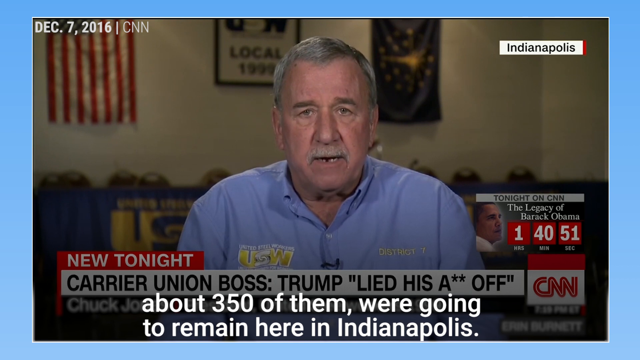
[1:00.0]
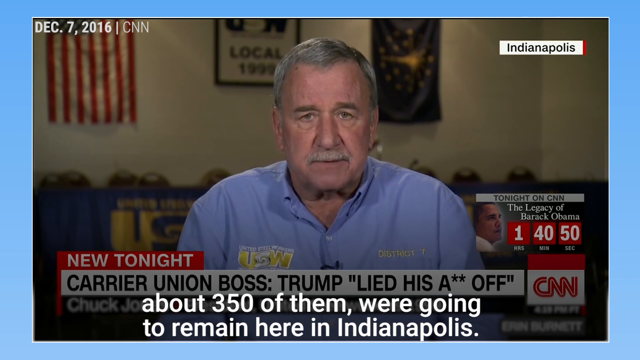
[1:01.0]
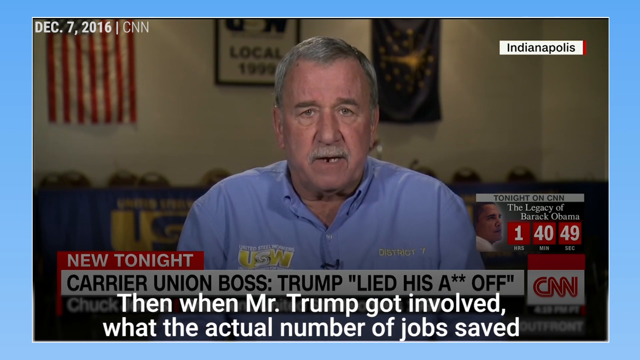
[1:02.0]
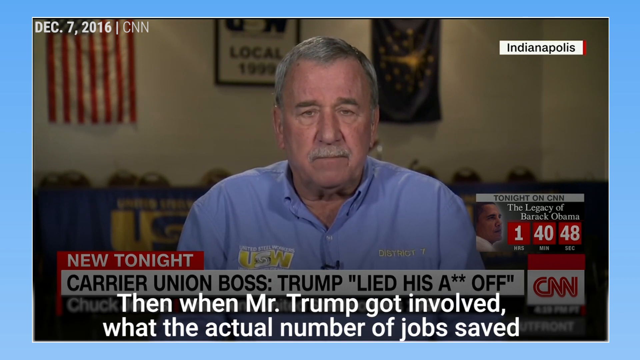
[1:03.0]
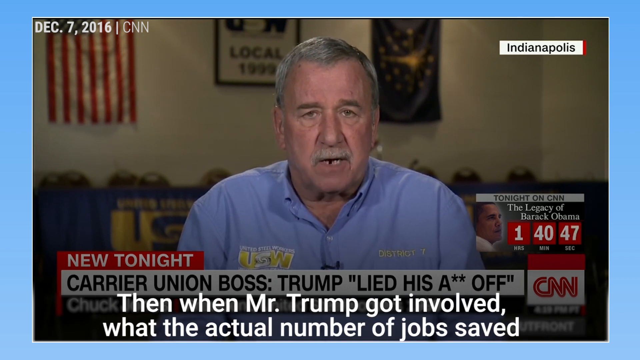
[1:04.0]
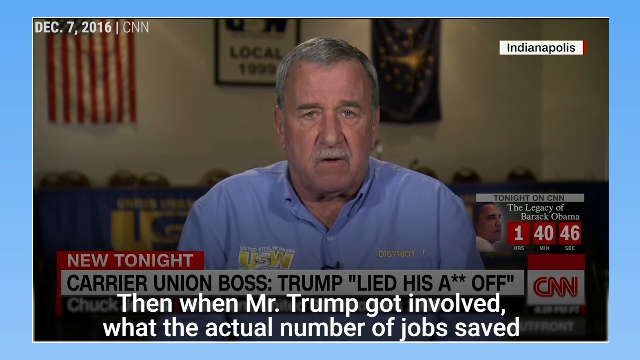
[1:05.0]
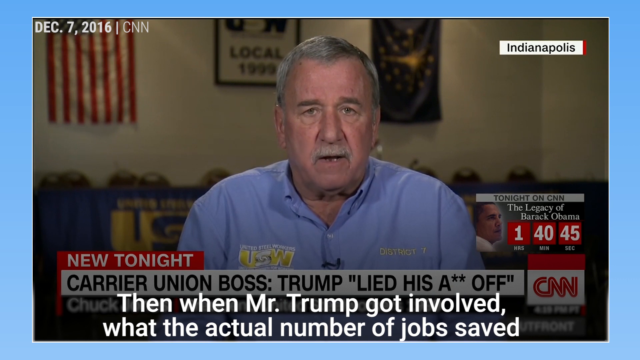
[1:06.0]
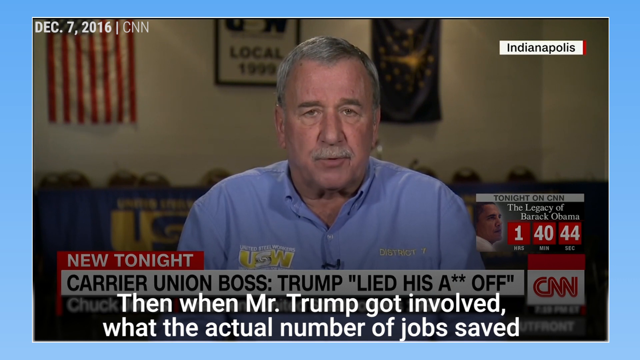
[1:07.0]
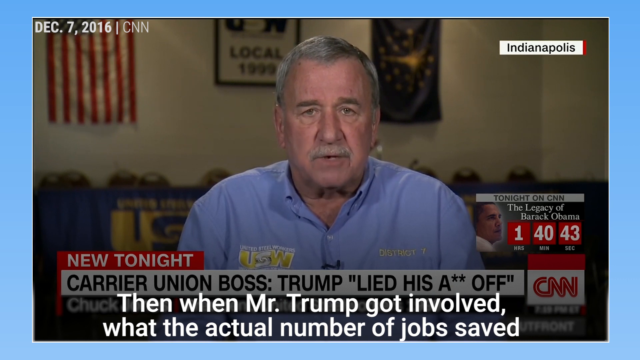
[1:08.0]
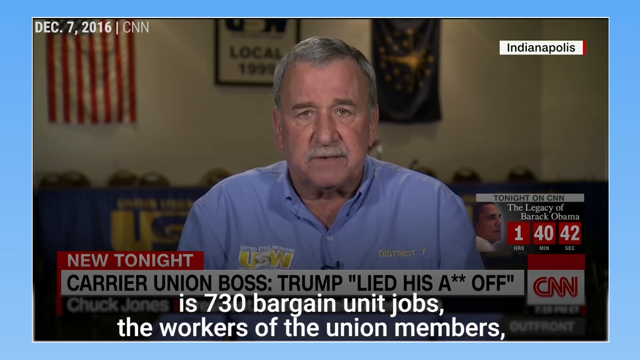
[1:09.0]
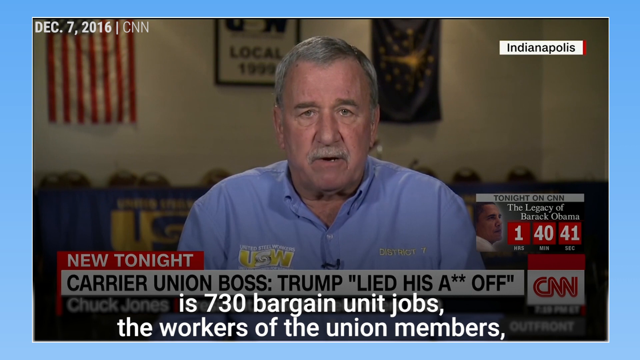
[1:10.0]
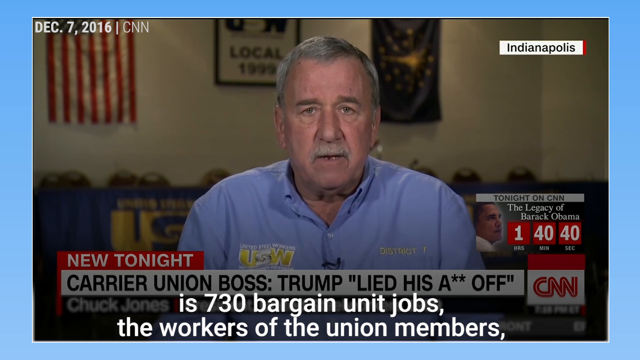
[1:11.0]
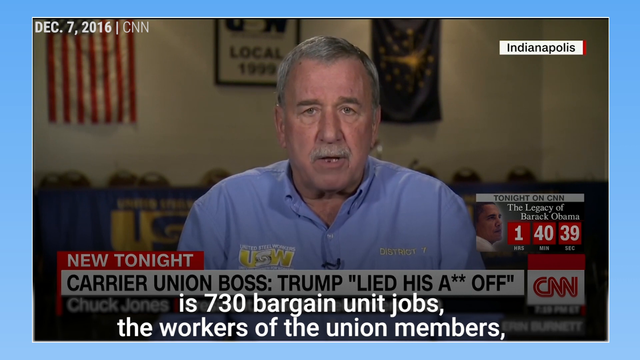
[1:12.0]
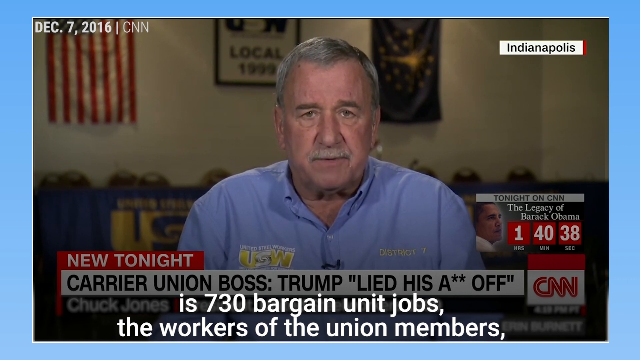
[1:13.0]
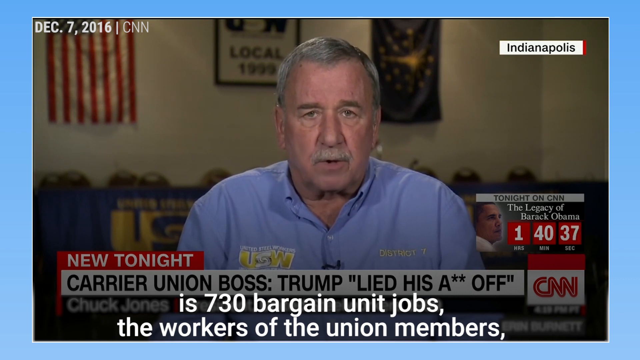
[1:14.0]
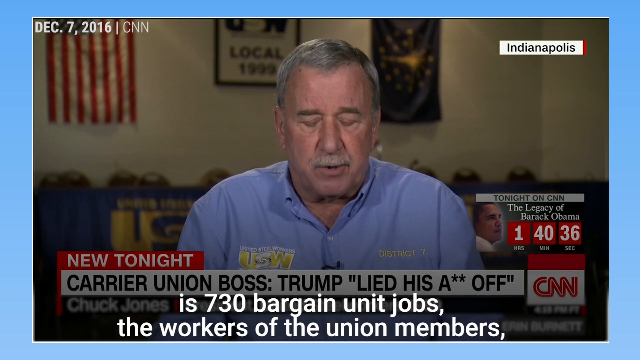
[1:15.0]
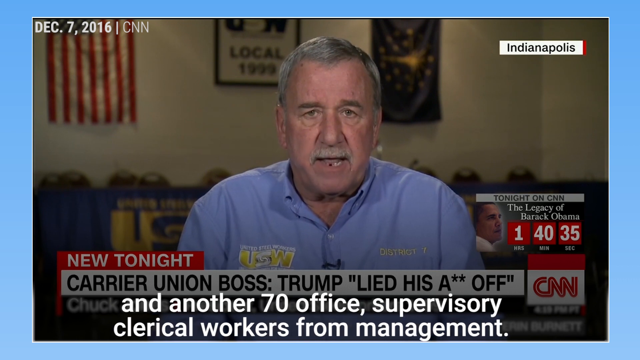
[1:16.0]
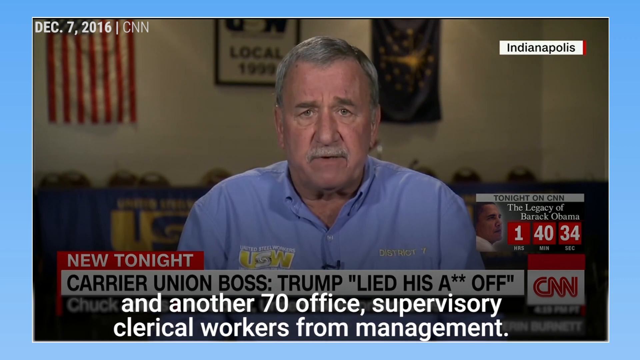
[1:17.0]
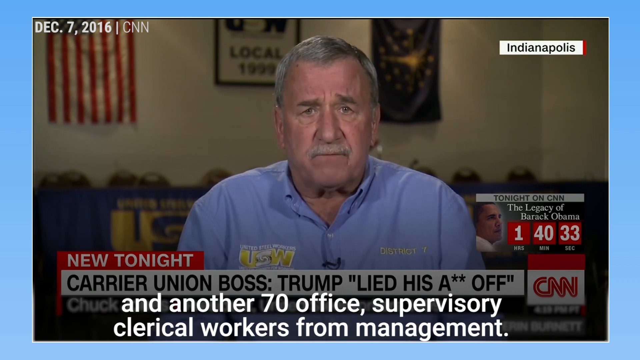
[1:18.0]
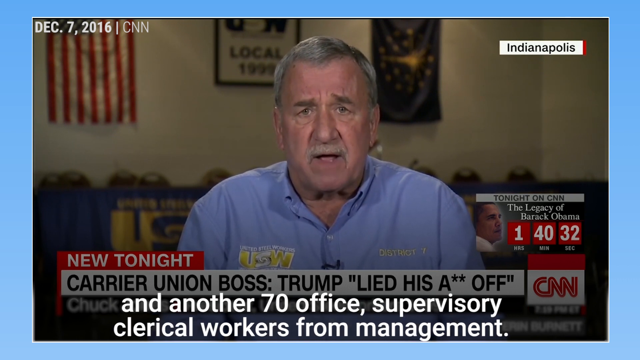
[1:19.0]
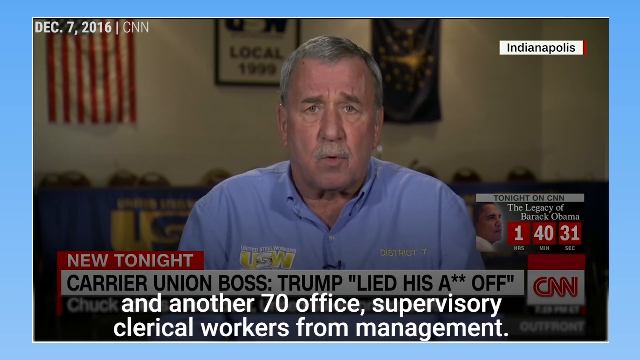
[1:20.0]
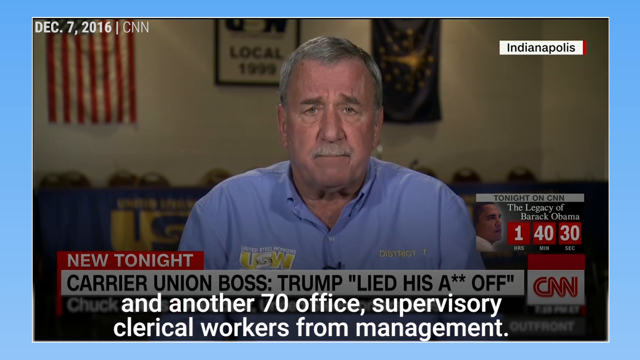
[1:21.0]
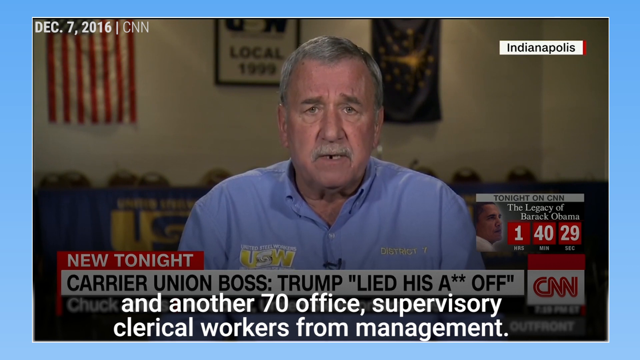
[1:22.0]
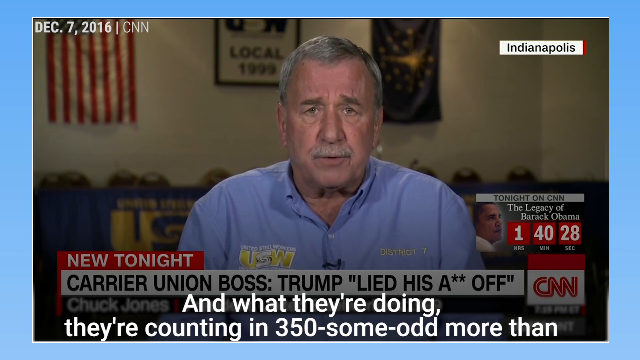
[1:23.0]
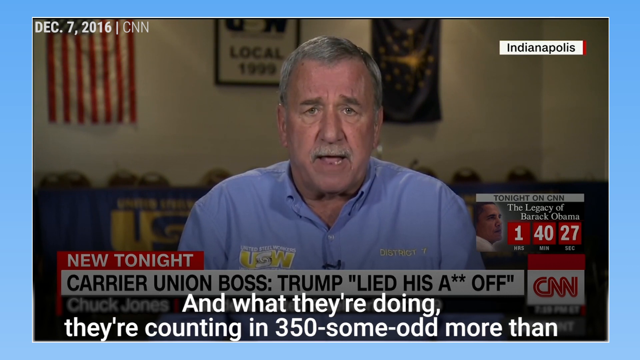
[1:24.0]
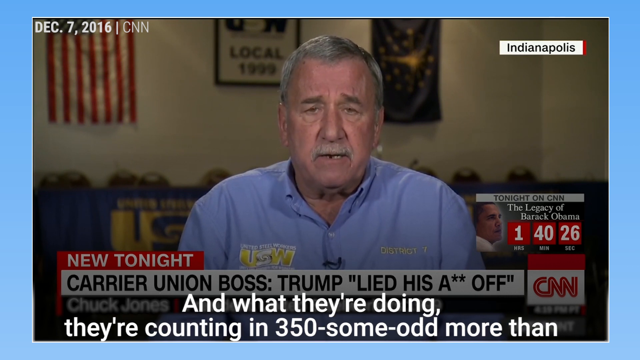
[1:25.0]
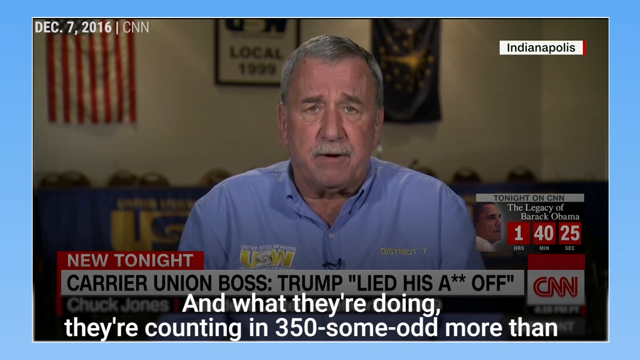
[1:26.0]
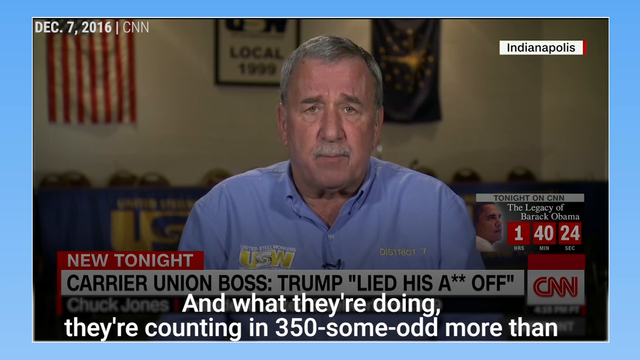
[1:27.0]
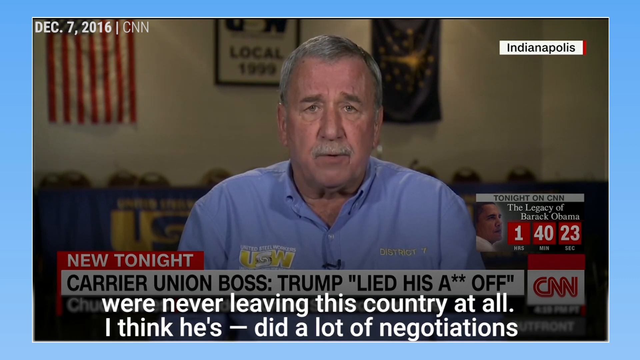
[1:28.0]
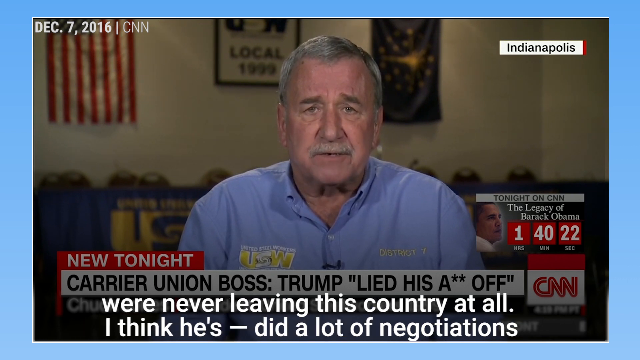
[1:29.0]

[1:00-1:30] White text at the bottom reads "which is great, which is great." Donald Trump looks down at what appear to be his notes, his right hand on the podium and his left hand apparently moving through the notes. A transition shows a still image of Trump resting his left hand on the shoulder of an employee, a Caucasian man with a shaved head who appears to wear a dark blue collared shirt. The employee looks at Trump happily, while Trump appears to be glaring at what appears to be a member of the security detail, an individual with a large frame in a black blue business jacket. Text then appears at the bottom reading "Union leader Chubb Jones, President of the USW, local 1999, says Trump lied his A off by inflating the numbers."